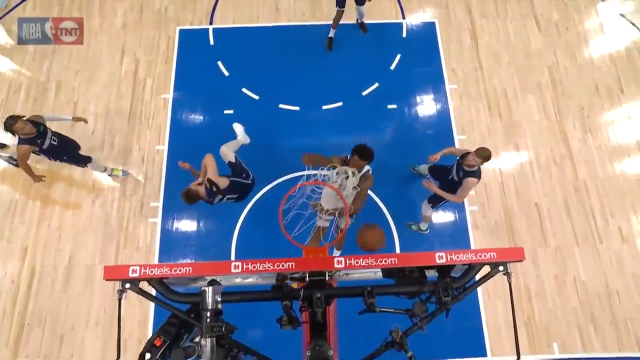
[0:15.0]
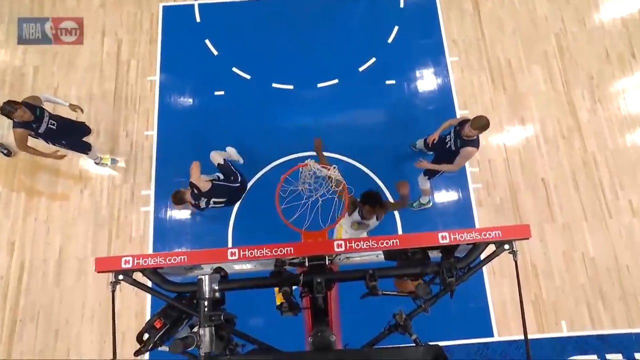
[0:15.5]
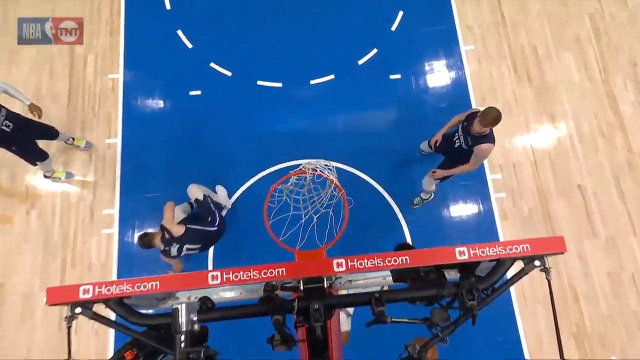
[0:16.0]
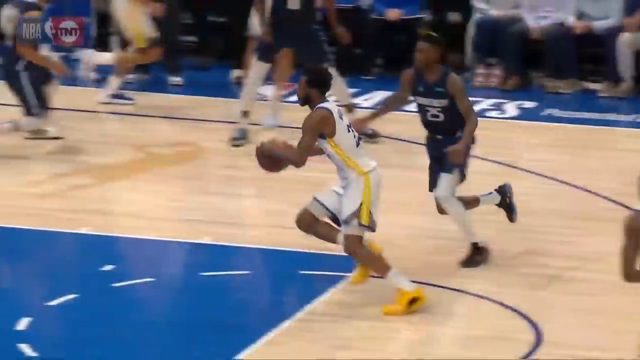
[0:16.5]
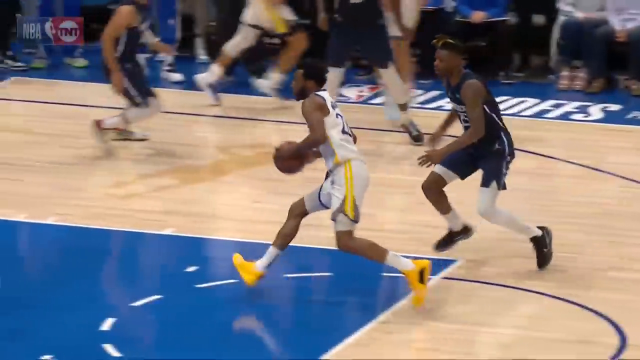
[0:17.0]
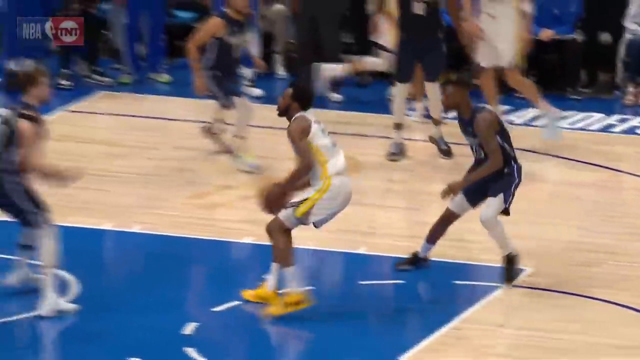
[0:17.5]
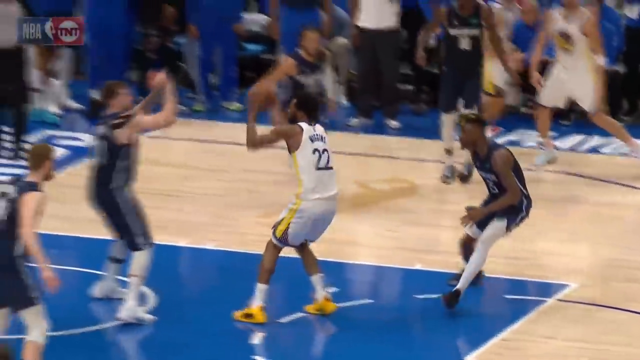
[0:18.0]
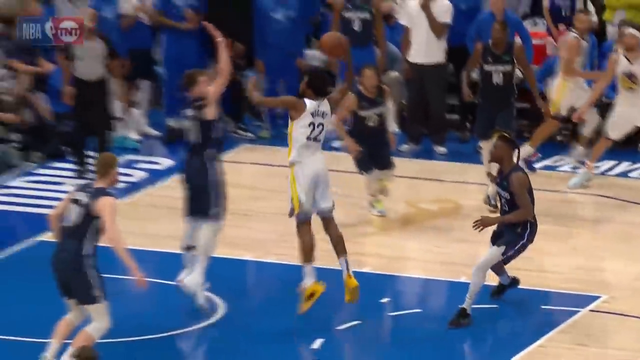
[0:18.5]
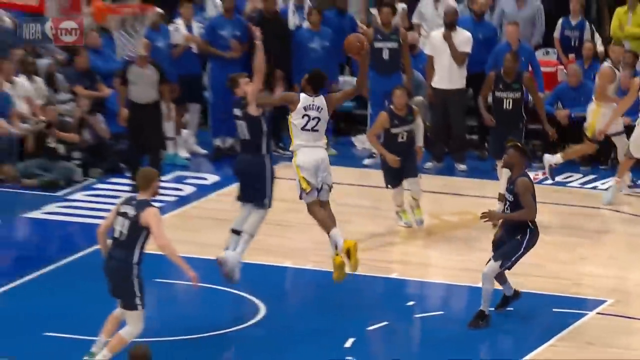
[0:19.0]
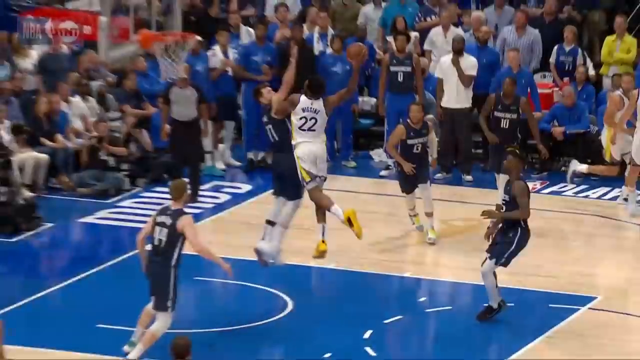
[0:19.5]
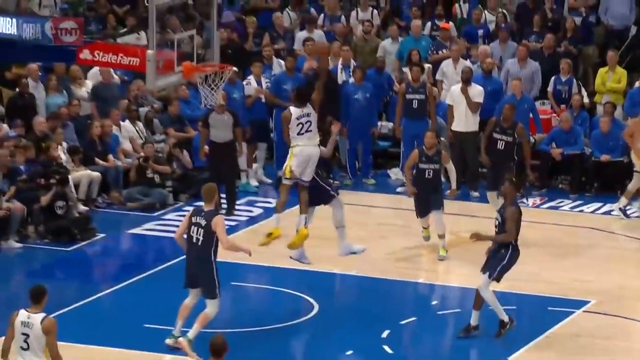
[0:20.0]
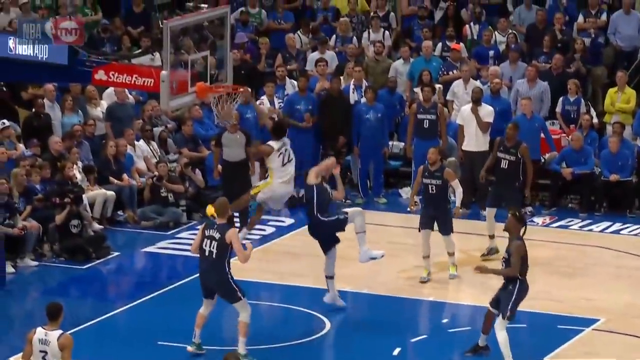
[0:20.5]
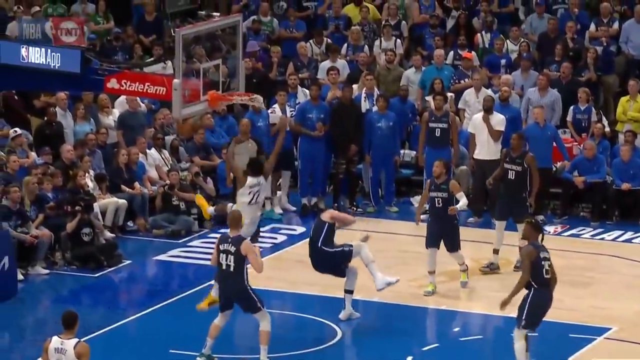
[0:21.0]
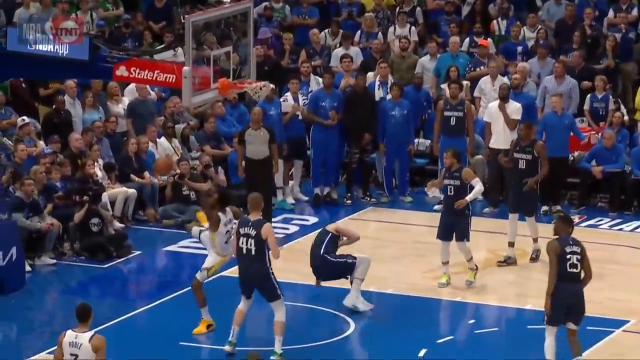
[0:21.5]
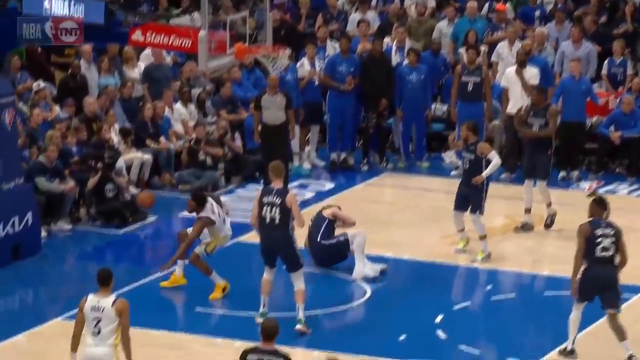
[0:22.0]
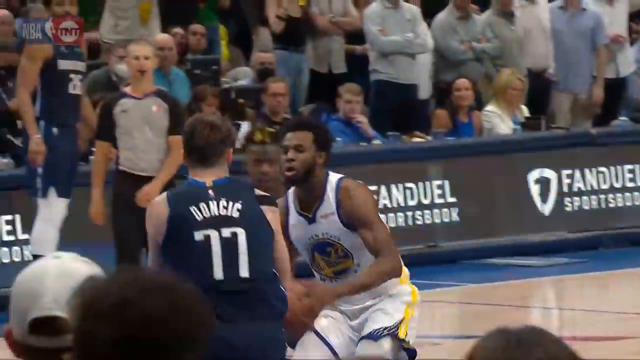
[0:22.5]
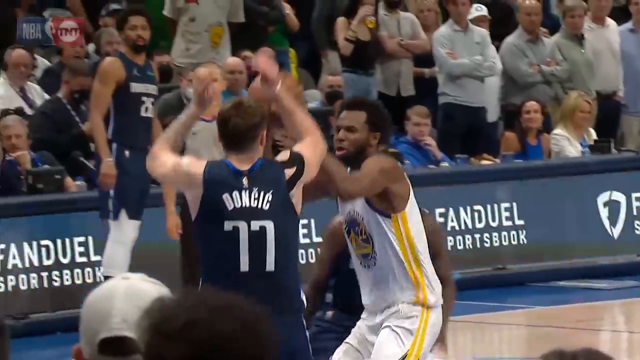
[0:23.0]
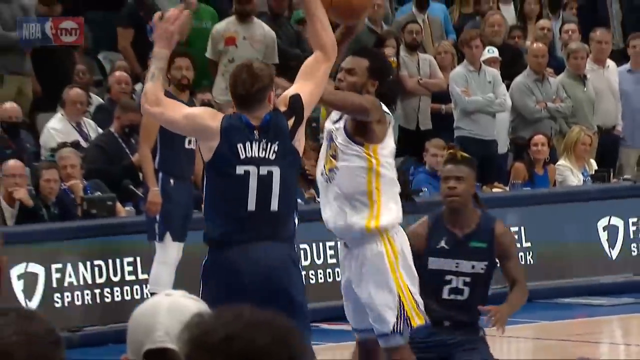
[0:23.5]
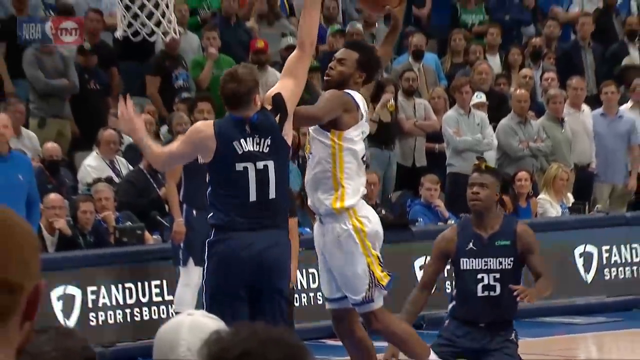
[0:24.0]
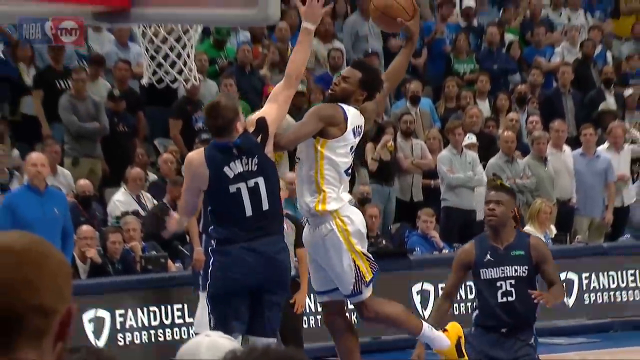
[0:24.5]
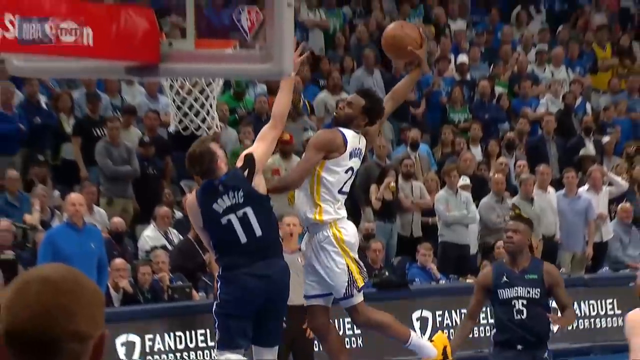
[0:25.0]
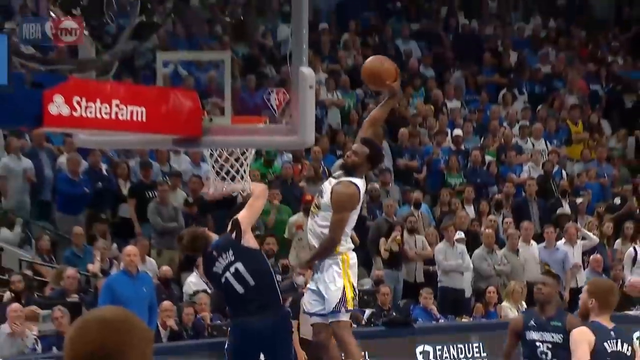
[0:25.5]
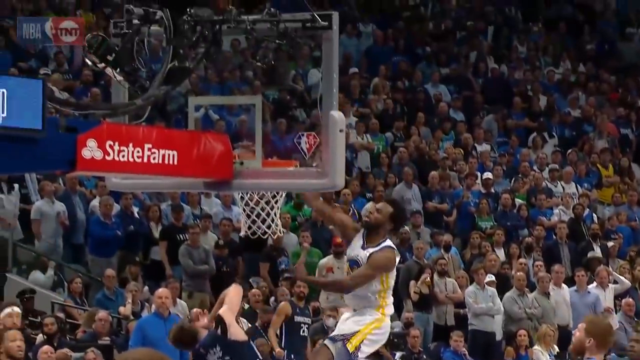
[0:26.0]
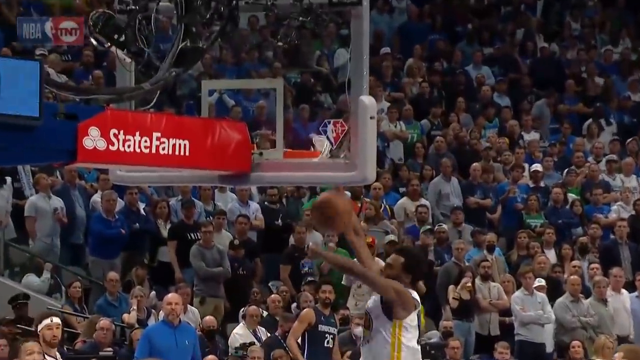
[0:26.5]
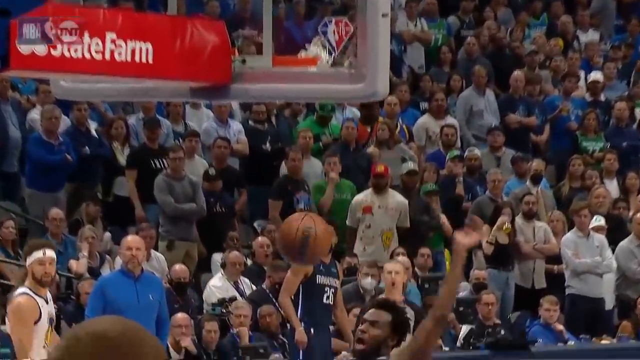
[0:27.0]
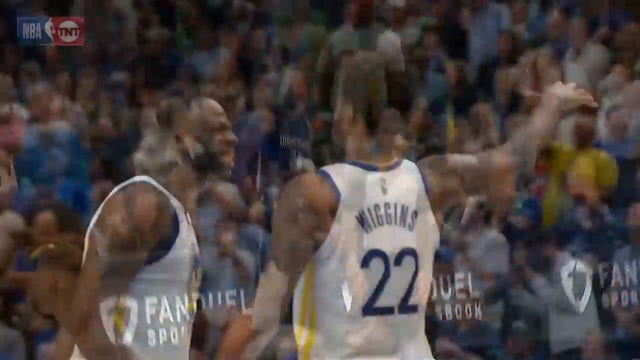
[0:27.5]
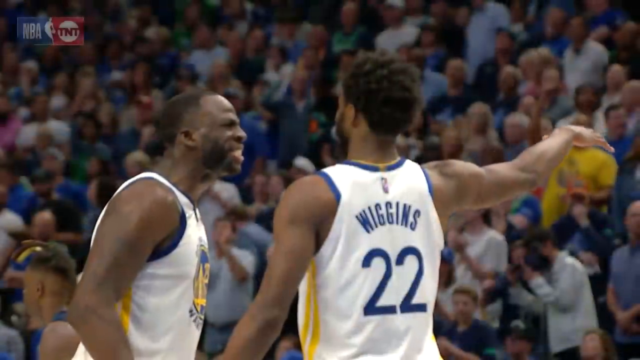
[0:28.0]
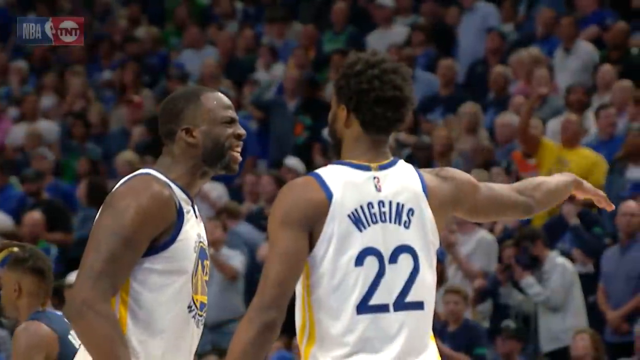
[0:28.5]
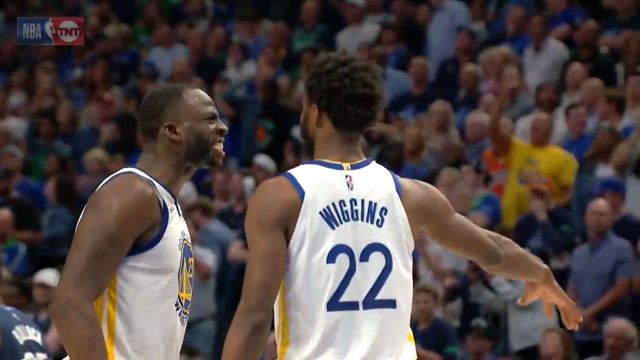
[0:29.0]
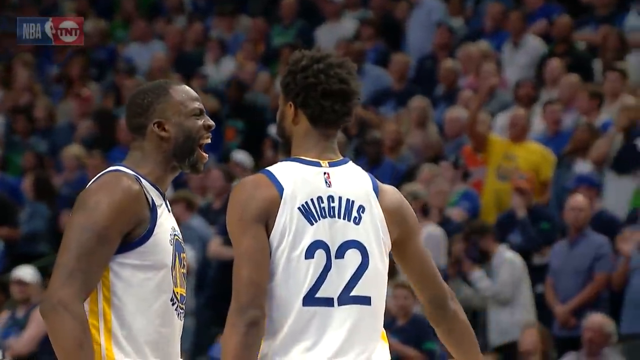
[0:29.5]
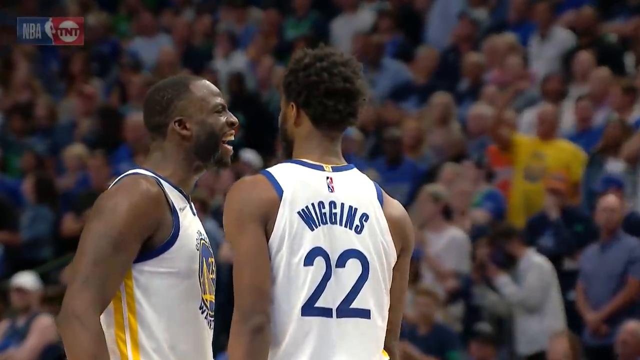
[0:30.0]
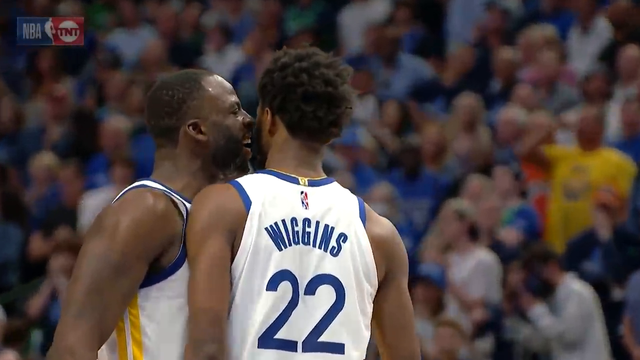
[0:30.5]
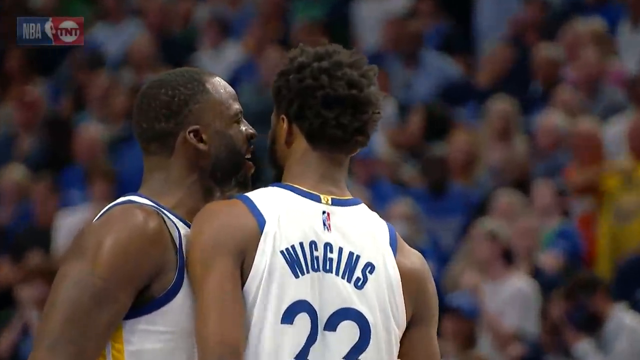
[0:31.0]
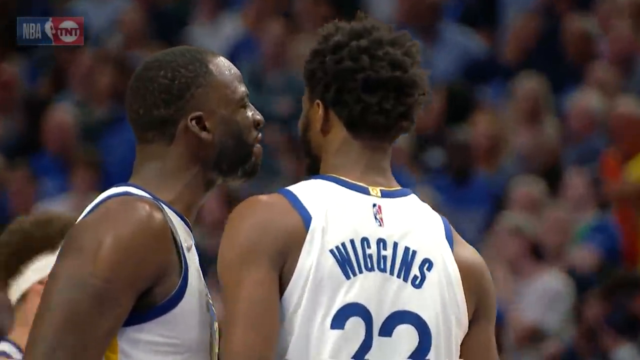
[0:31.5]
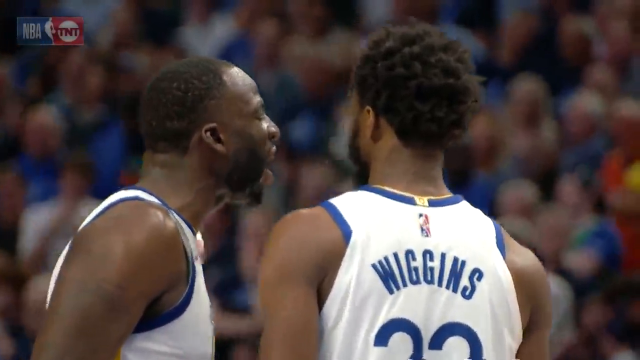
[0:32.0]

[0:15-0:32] The footage is from an NBA basketball game between the Golden State Warriors and the Dallas Mavericks. Multiple angles and slow-motion replays show Andrew Wiggins throwing down a slam dunk directly over Luka Doncic. Luka appears to have been hit in the face, as he grabs his face while falling onto his back. Wiggins slams the ball down with his right hand. Finally, Draymond Green and Andrew Wiggins get hyped up, chest bumping and celebrating the play, while fans and teammates in the background go wild in celebration.